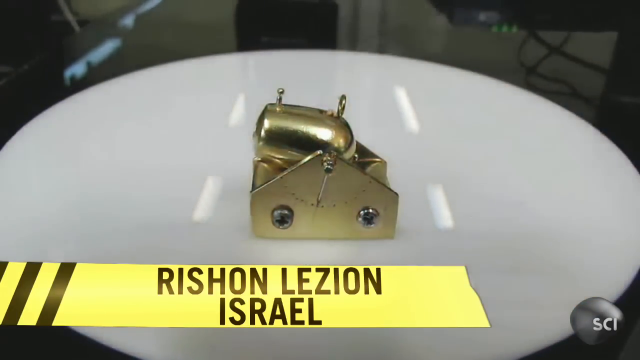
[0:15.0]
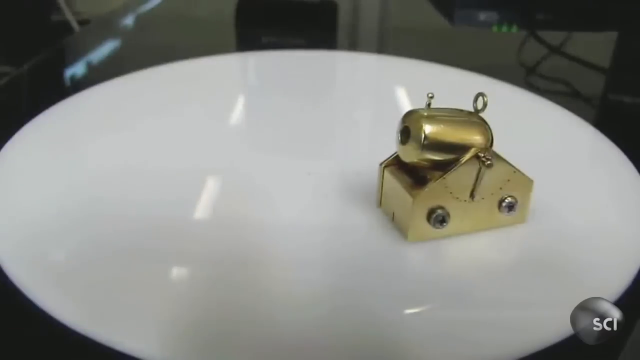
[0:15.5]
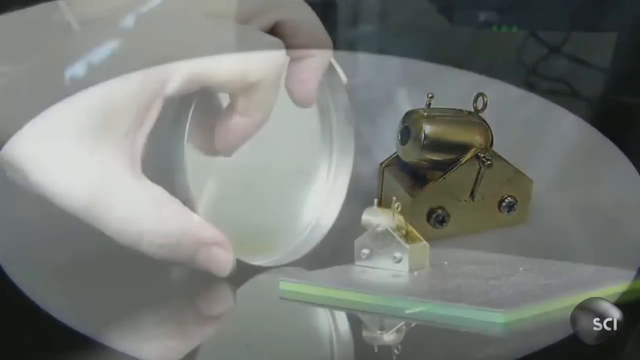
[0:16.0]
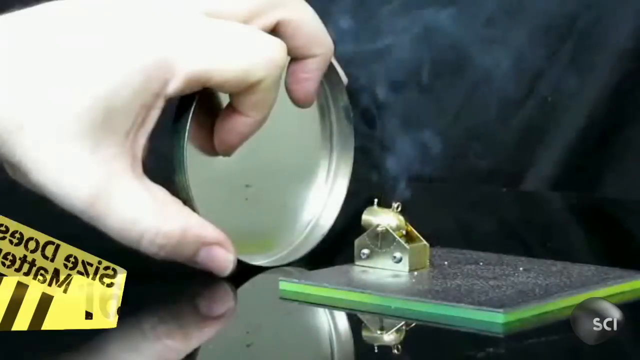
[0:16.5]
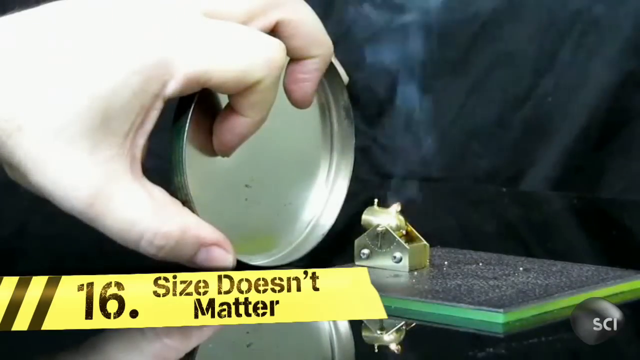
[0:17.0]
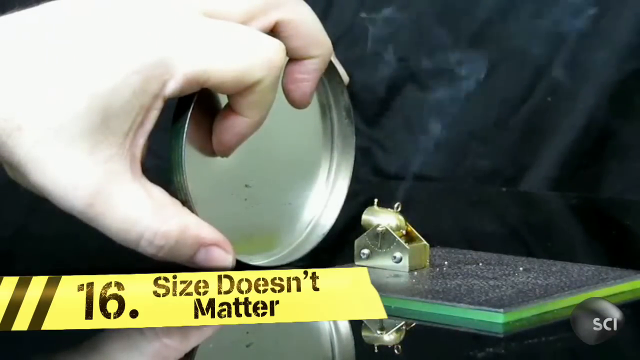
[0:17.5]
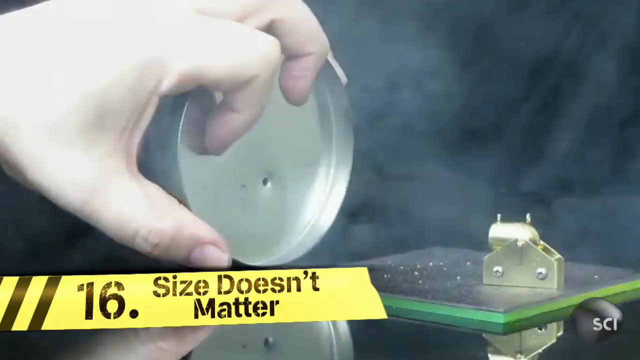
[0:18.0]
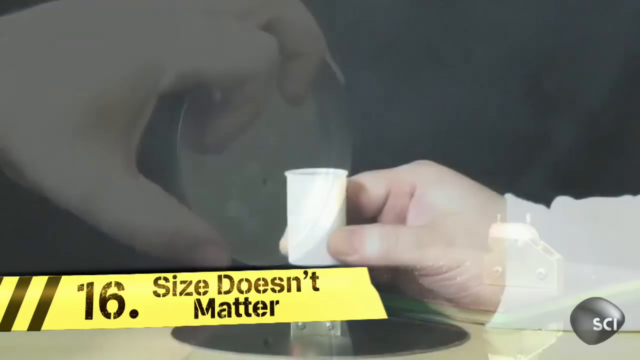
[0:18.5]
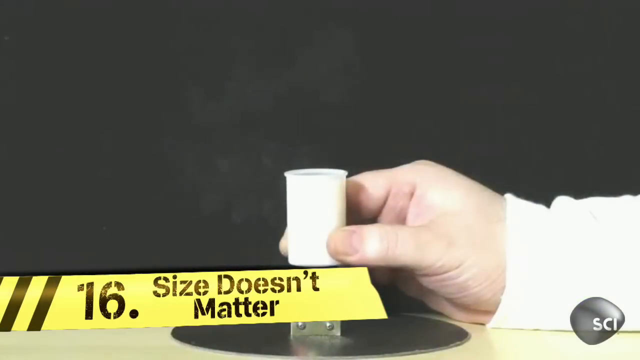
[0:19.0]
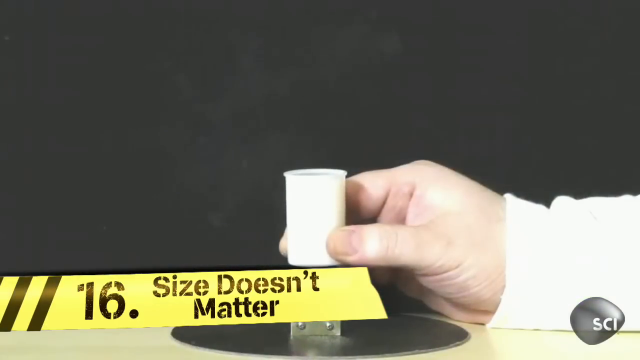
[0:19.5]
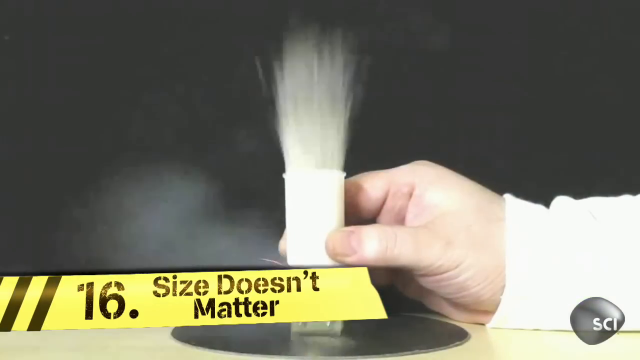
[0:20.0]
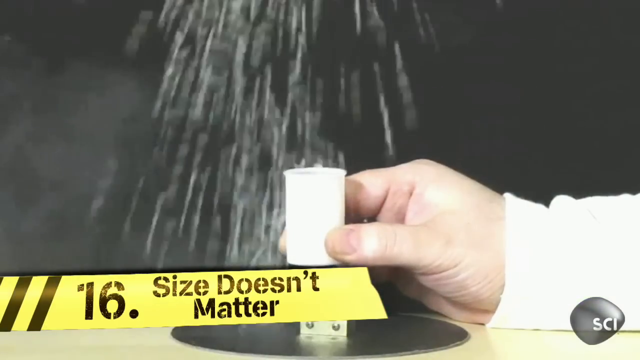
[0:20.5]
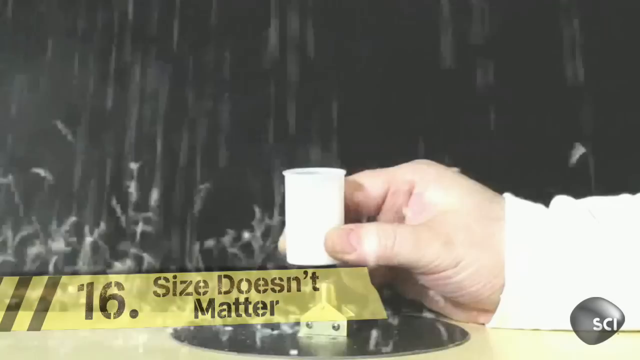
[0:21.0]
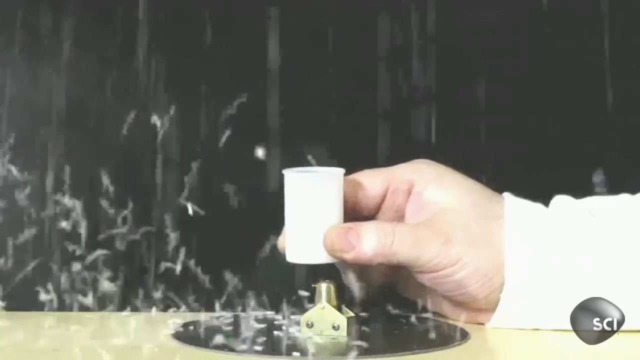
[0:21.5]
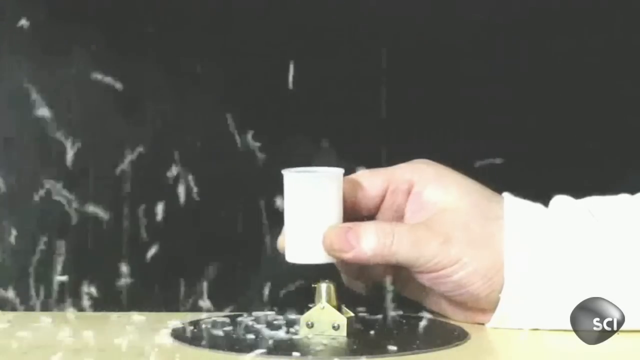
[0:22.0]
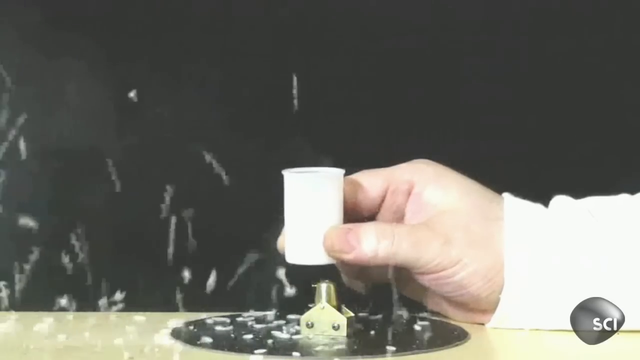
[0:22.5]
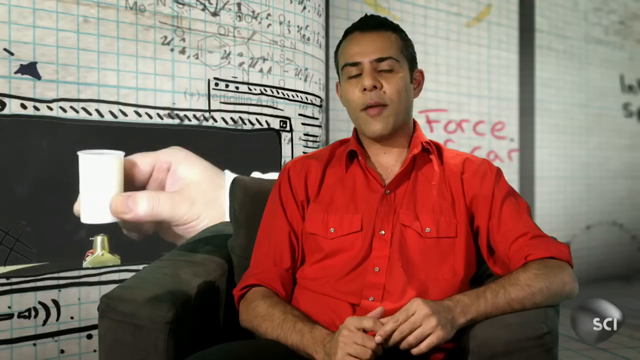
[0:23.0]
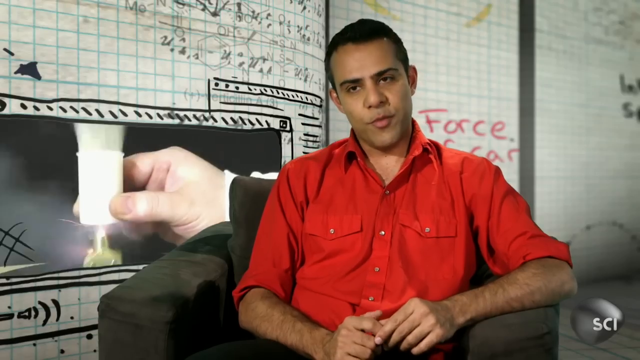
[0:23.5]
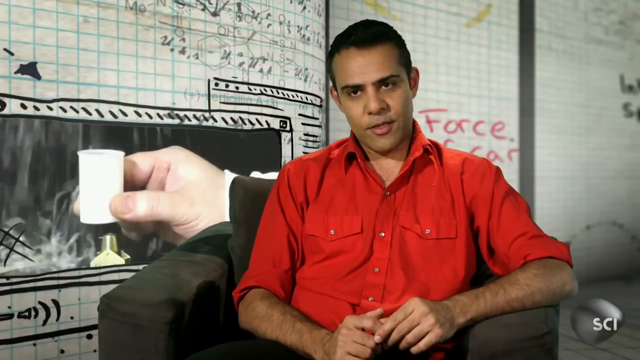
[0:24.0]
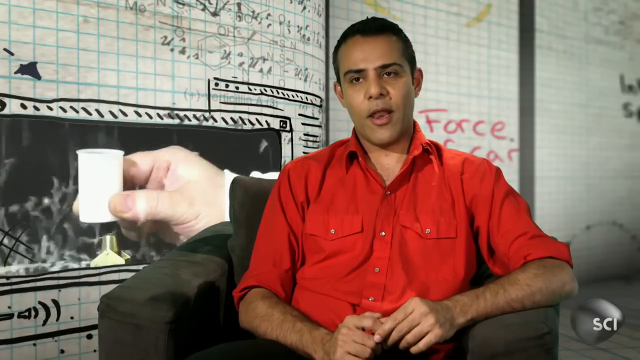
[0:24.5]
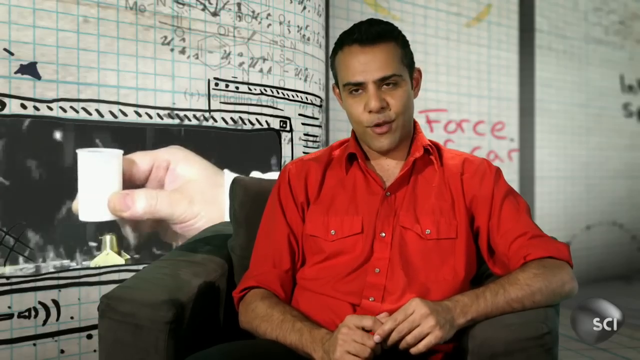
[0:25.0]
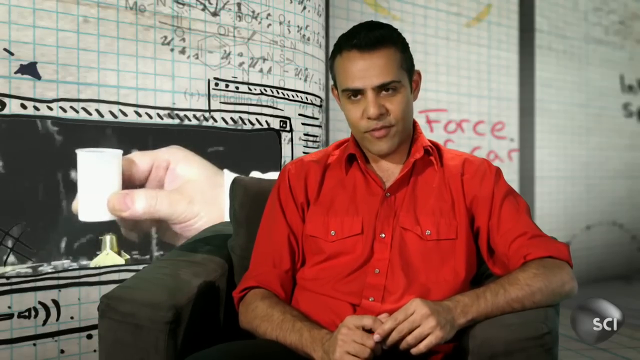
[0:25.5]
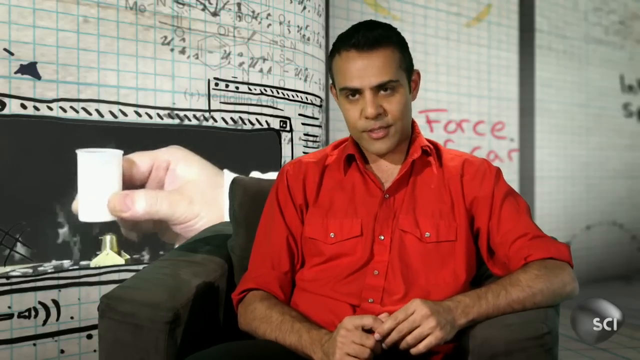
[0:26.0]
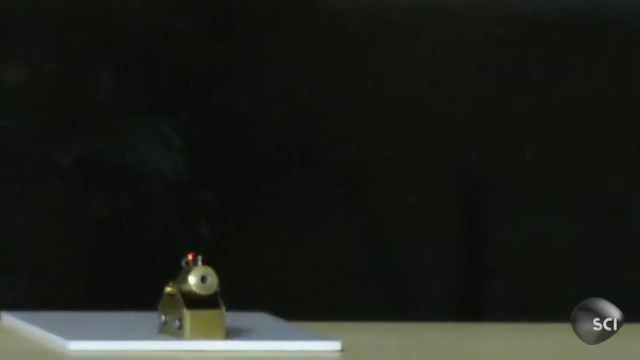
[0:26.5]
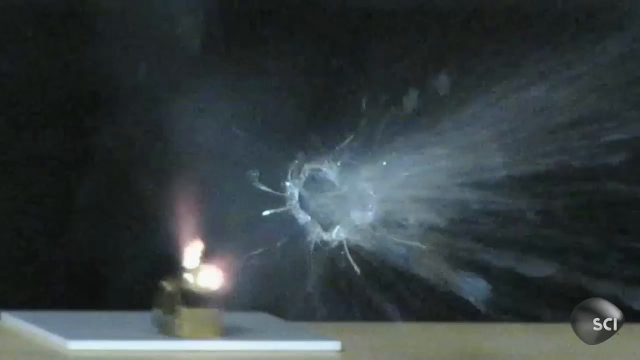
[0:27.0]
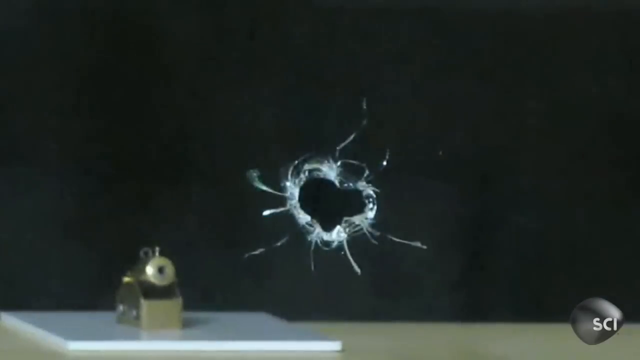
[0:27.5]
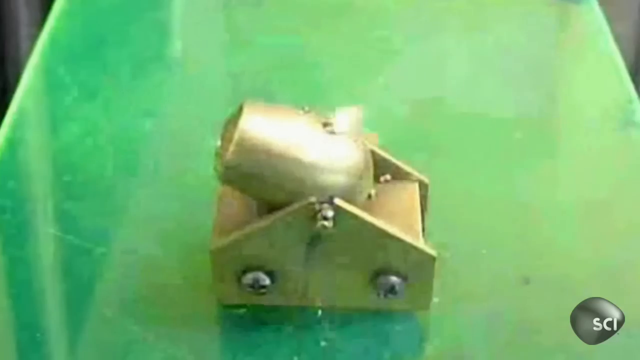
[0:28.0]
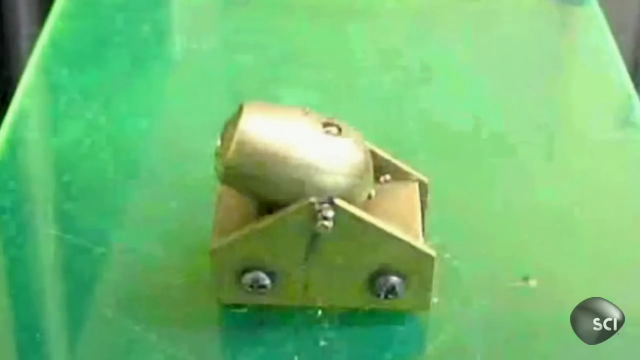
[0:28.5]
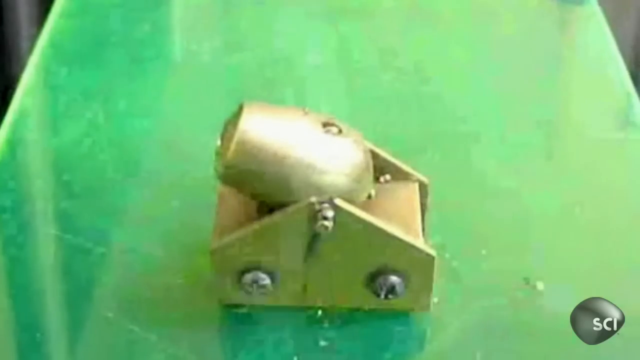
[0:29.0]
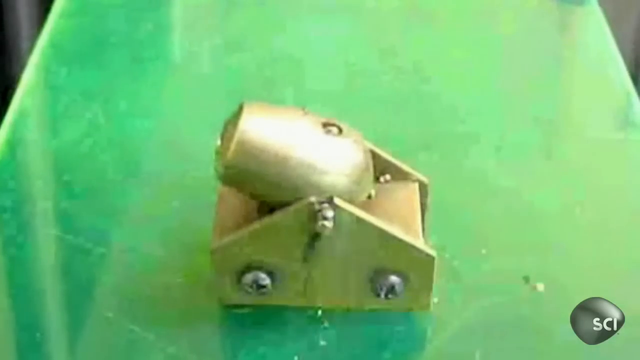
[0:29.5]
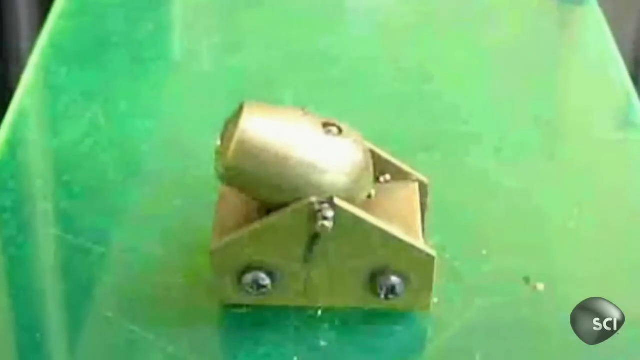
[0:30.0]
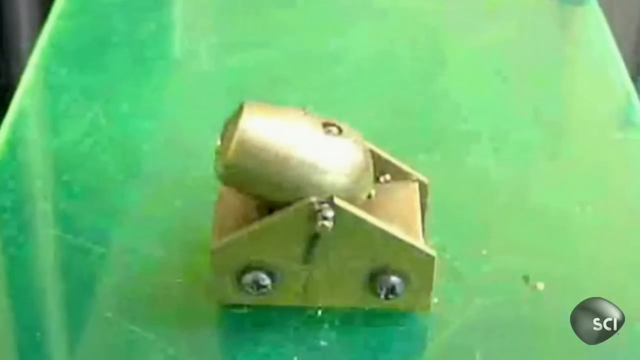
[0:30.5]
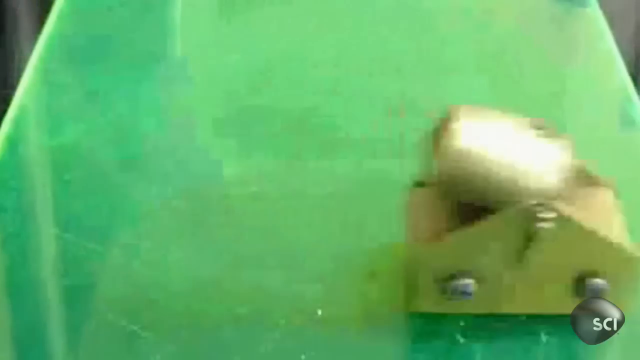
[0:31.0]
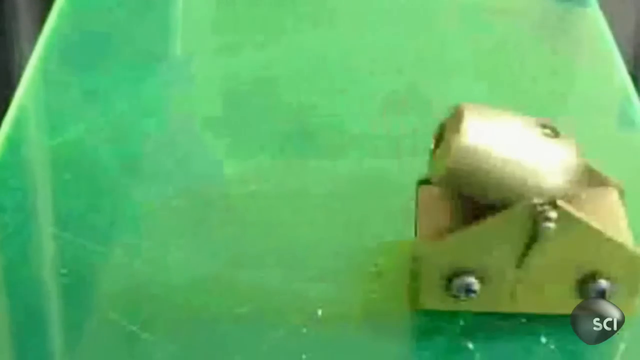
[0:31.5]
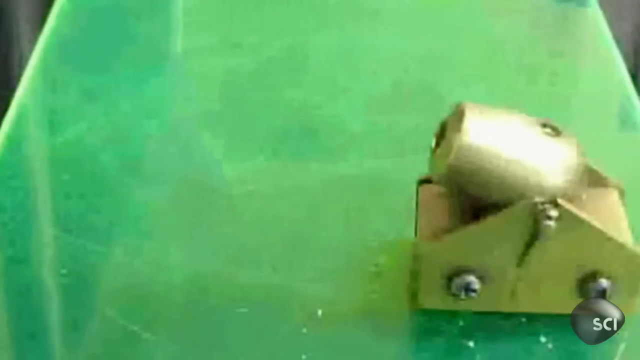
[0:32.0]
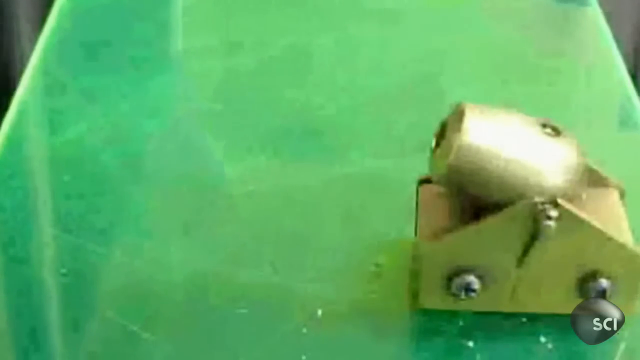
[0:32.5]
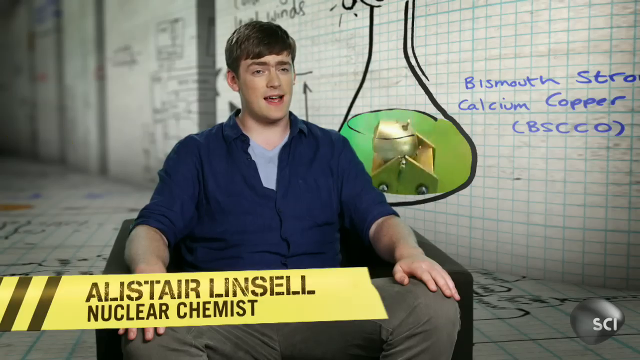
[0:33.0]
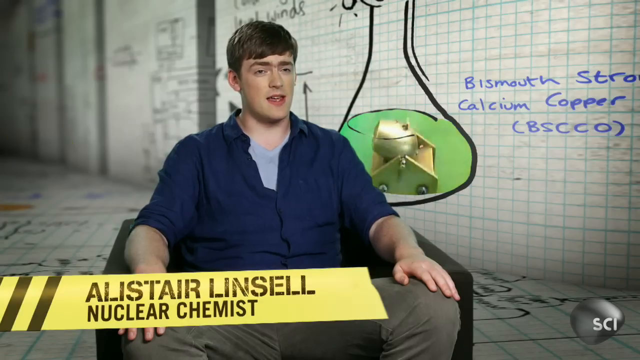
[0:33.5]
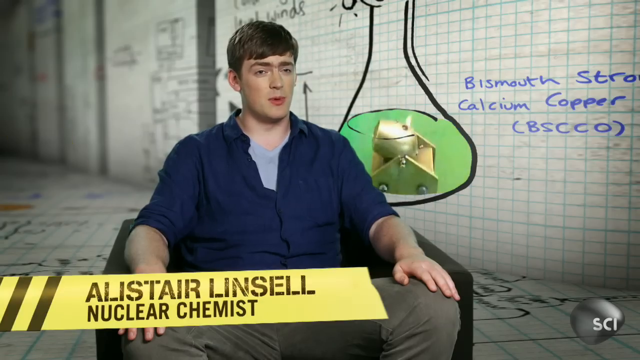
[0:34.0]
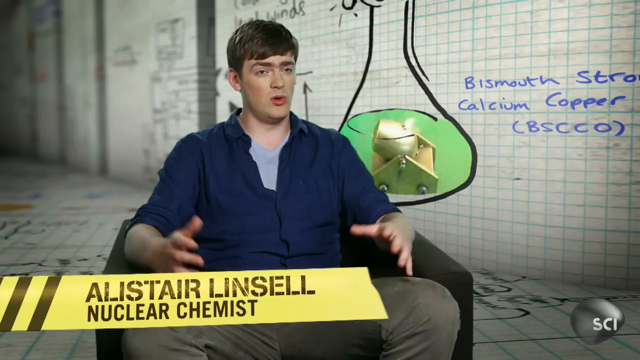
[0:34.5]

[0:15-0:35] The little cannon appears to shoot something and blow it up. A man in a red shirt talks in front of a screen that shows the objects being hit. The cannon goes off and makes a hole in some glass, shattering and breaking it. Then the cannon is on a green surface, and when it fires it kind of scoots backward. Another person is interviewed, a guy in a blue shirt, and the text "16 size doesn't matter" appears. The cannon also makes a dent in what looks like a metal lid and makes something shoot out of a glass.